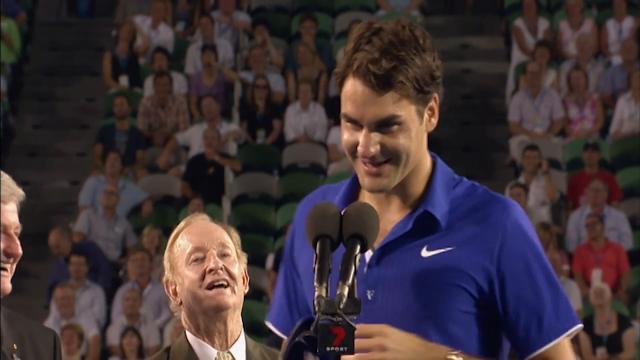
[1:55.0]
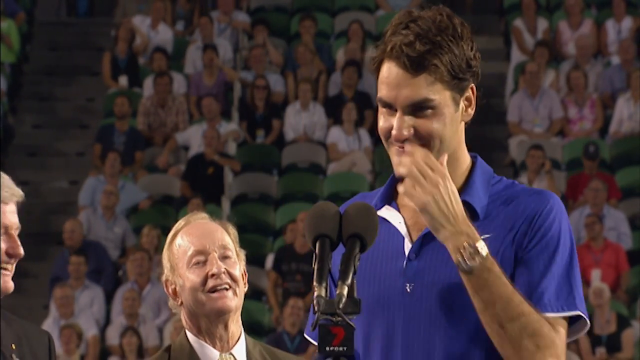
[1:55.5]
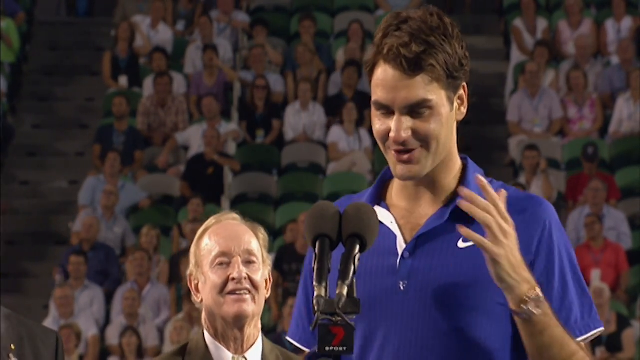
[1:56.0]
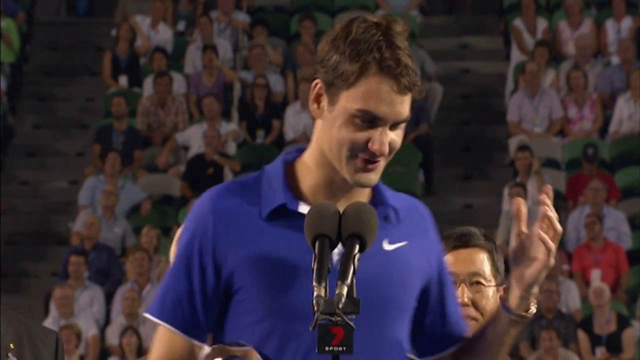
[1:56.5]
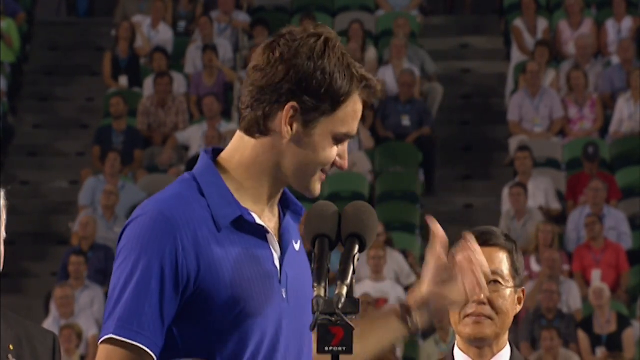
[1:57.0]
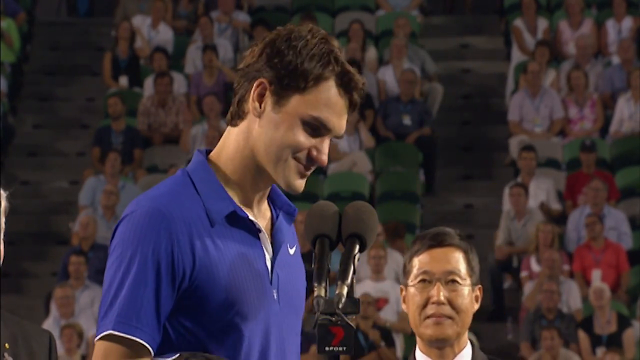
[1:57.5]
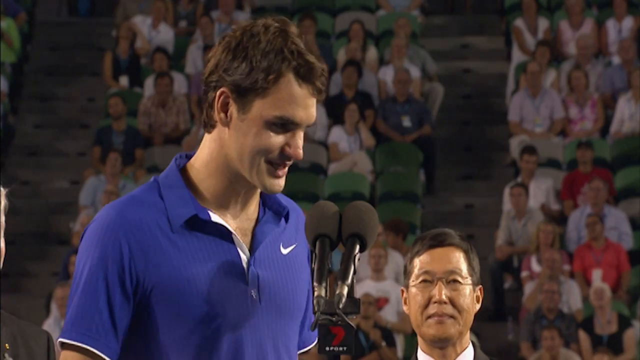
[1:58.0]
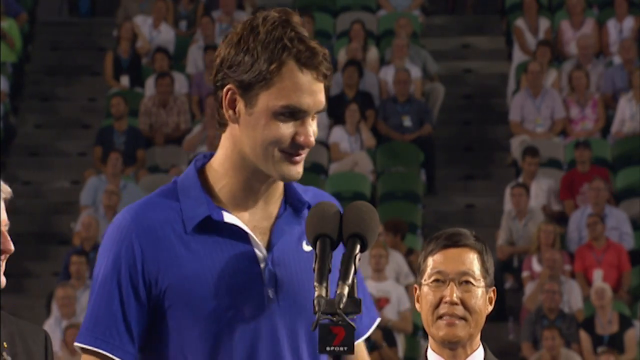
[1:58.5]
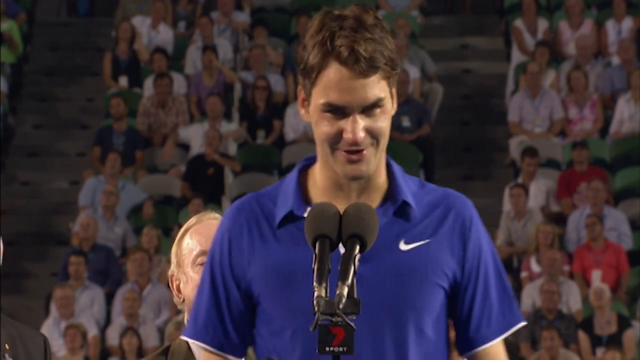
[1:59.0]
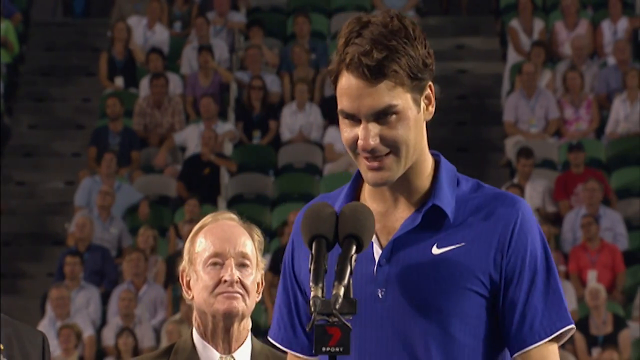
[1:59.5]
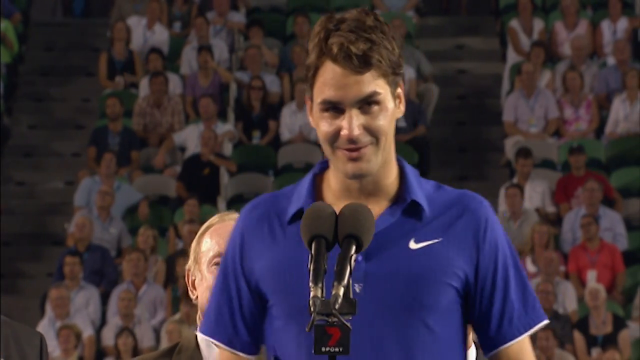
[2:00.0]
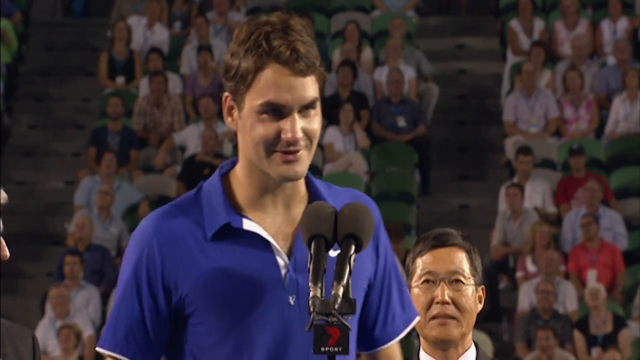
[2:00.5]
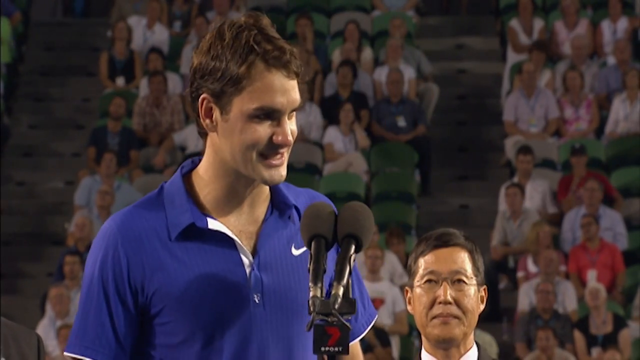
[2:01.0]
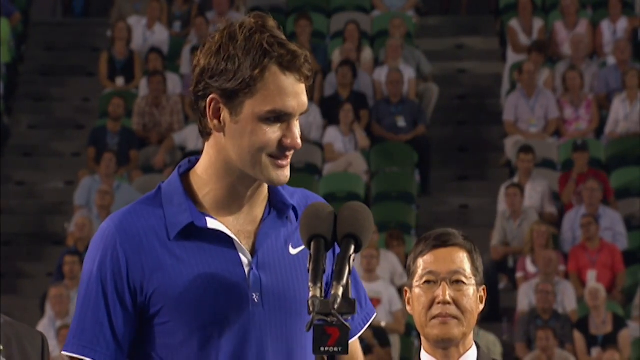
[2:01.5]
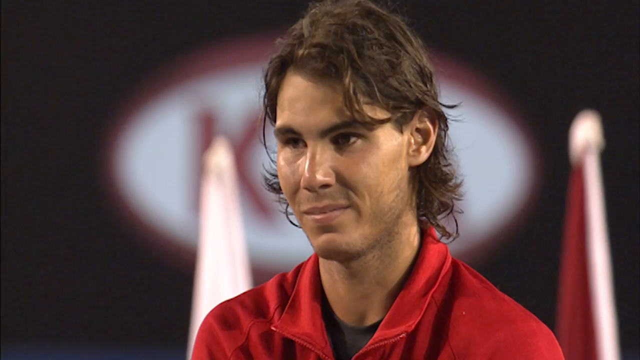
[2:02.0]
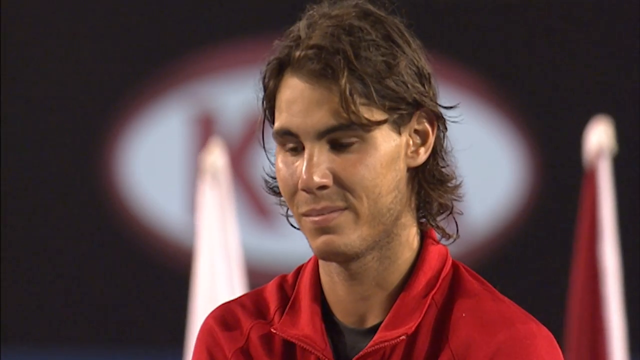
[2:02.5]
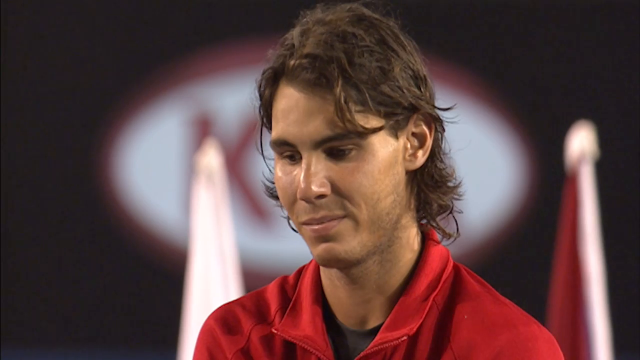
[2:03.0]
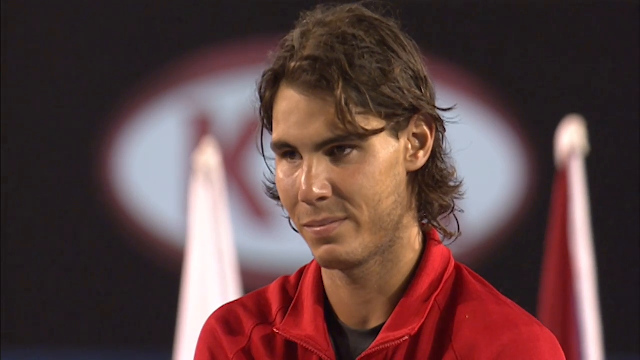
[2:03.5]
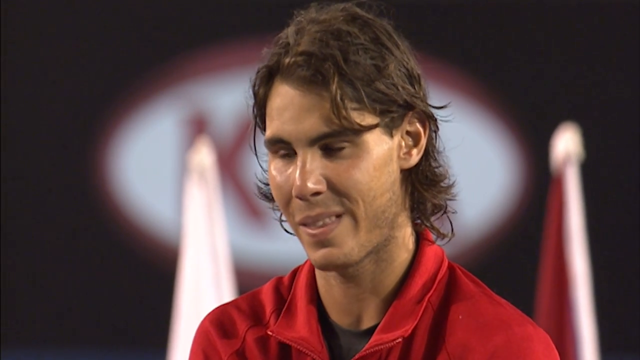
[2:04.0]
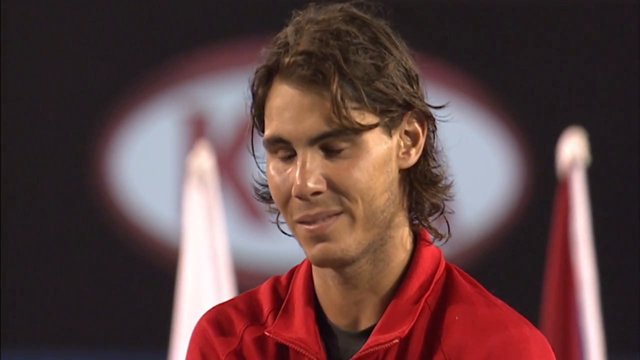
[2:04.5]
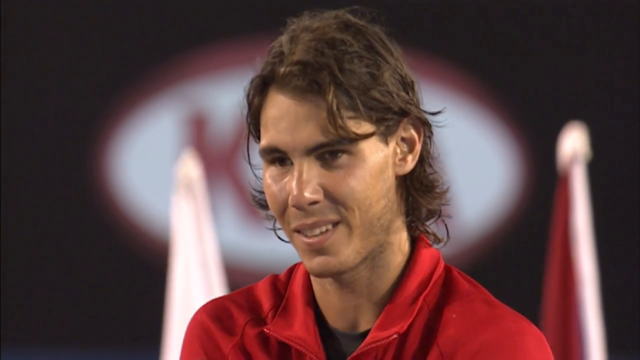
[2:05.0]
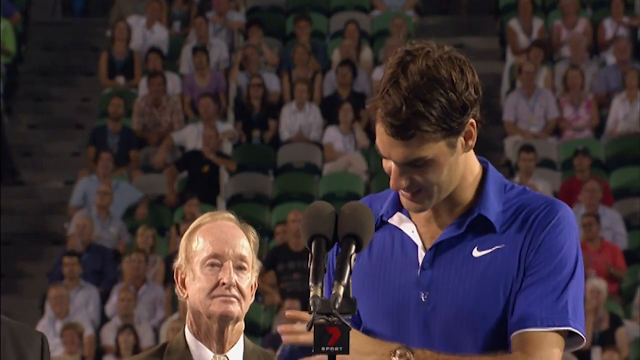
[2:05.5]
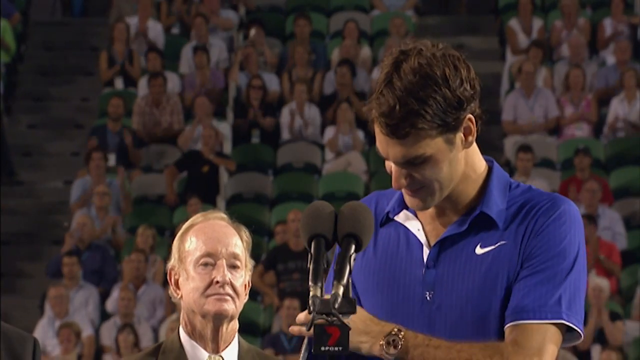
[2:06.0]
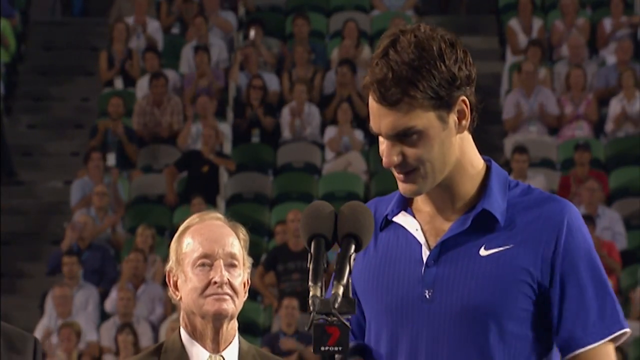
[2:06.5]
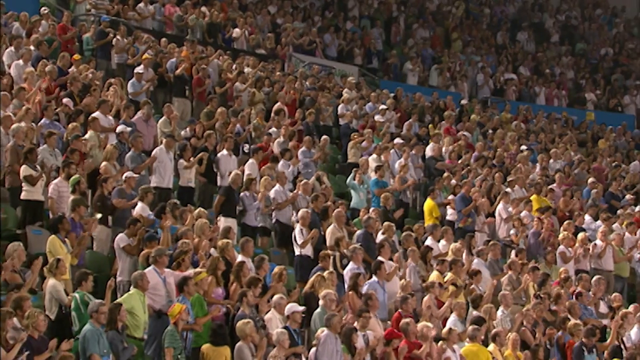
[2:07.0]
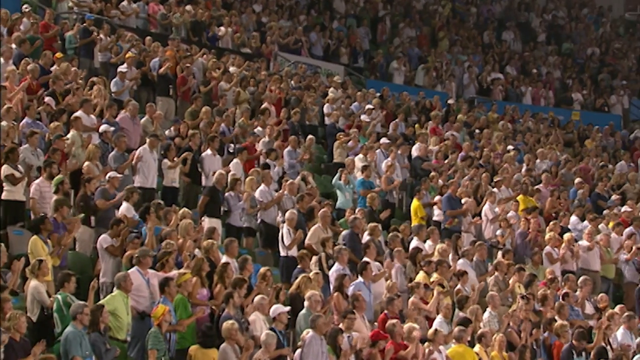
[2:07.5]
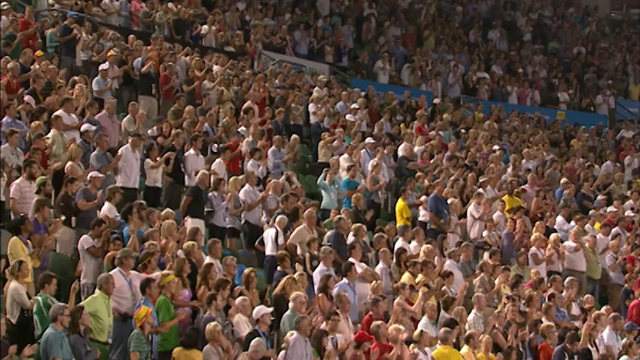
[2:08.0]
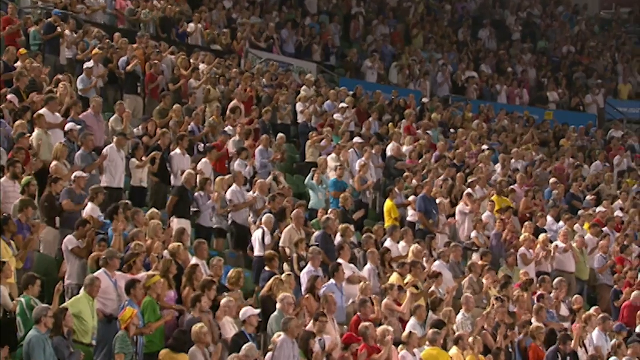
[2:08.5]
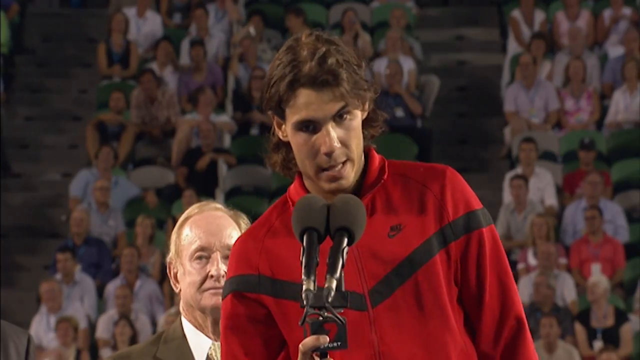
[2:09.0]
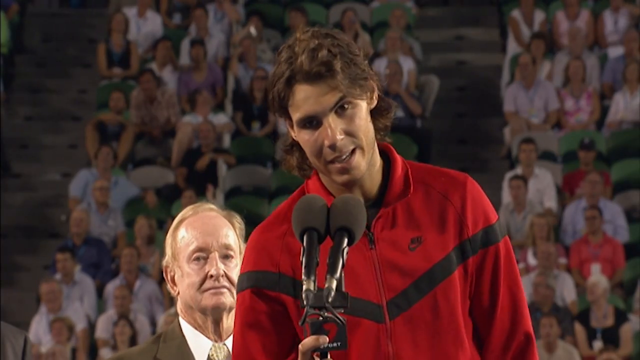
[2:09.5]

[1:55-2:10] Roger, in a blue t-shirt with a Nike logo on his chest, keeps talking while the fans clap, and he points to the manager. He points his finger toward the fans, who clap, most of them standing. Sponsor emblems are shown in the back, and cameras keep taking pictures of both Roger and the winner. The winner, also in Nike clothing, a red jacket with a V-shape on the chest, smiles, goes to the mic and starts his speech.